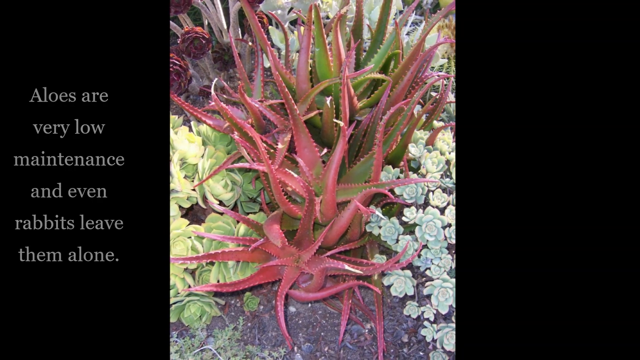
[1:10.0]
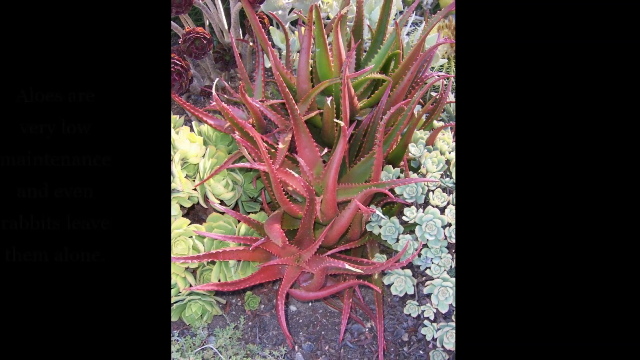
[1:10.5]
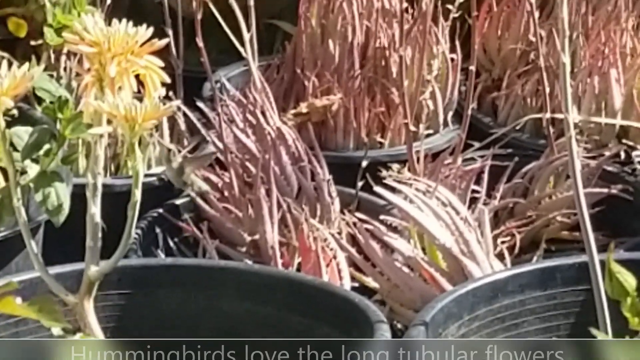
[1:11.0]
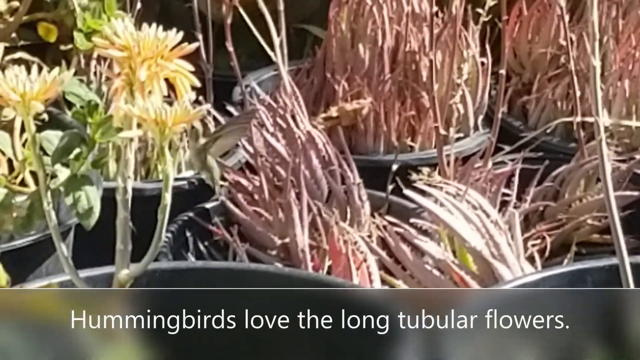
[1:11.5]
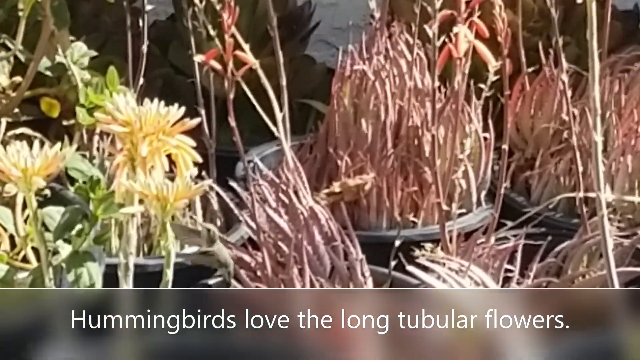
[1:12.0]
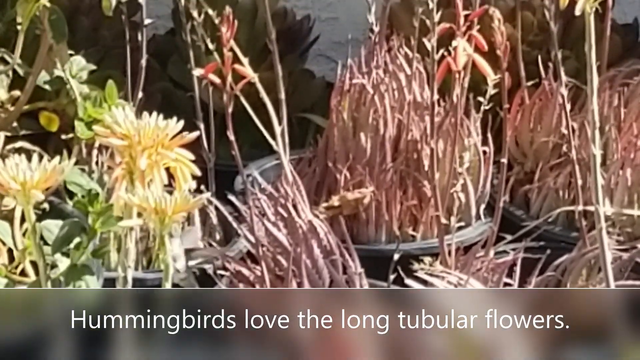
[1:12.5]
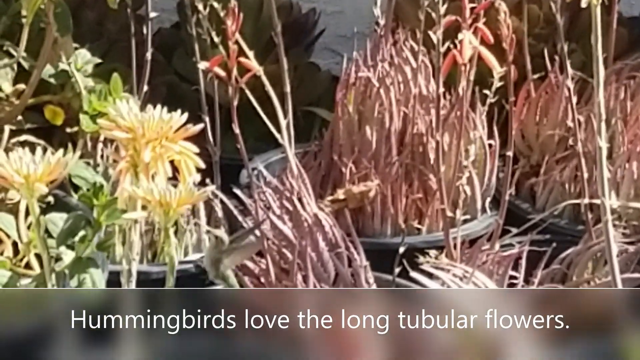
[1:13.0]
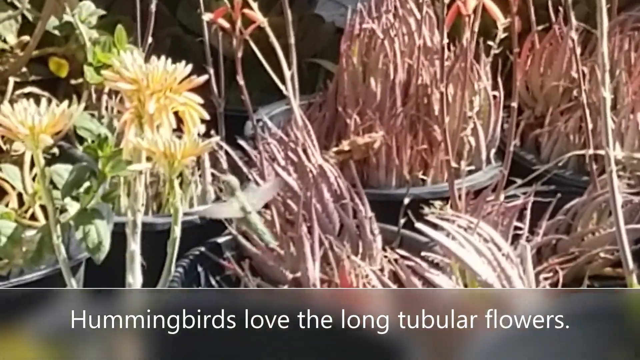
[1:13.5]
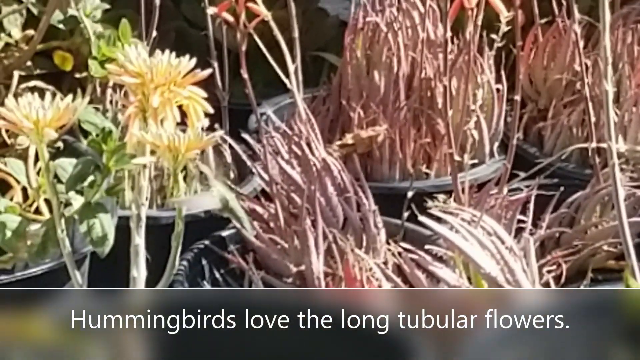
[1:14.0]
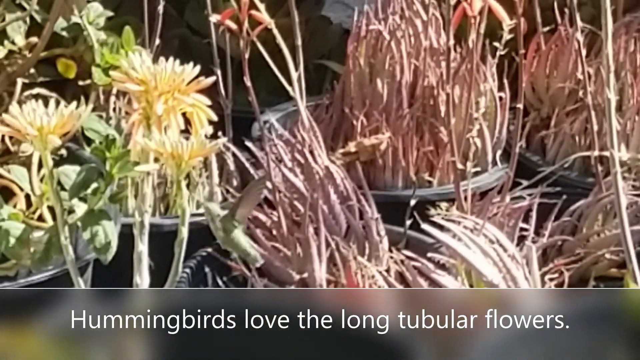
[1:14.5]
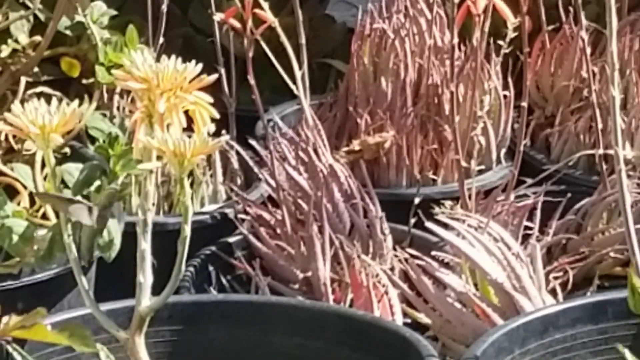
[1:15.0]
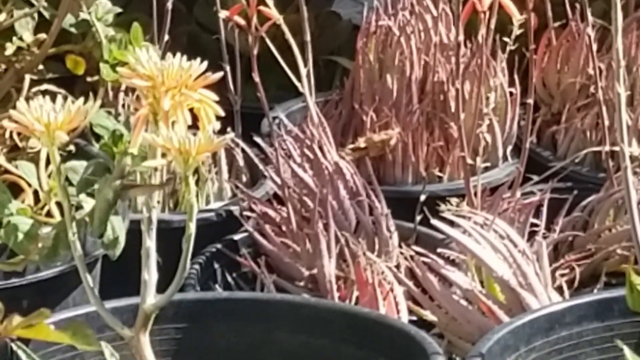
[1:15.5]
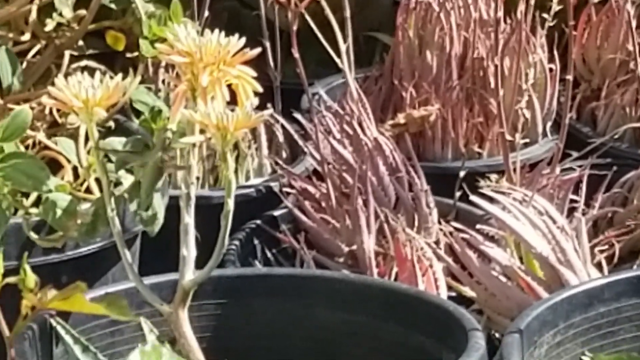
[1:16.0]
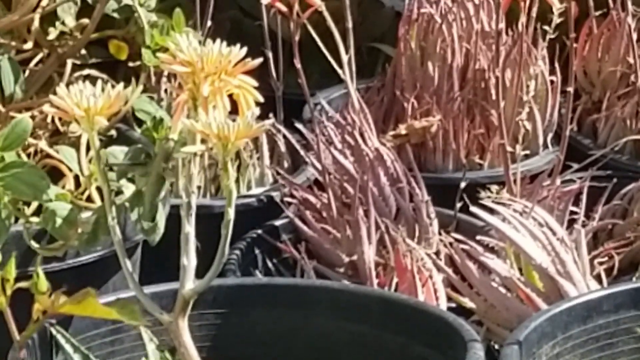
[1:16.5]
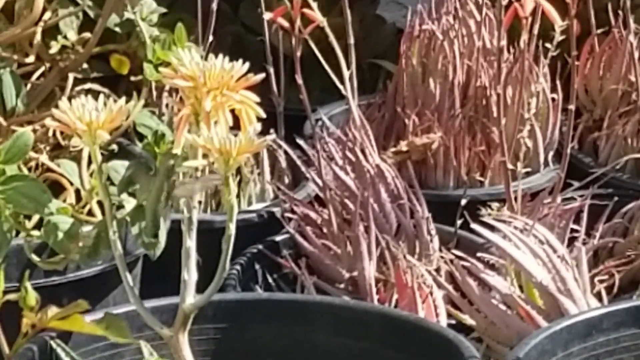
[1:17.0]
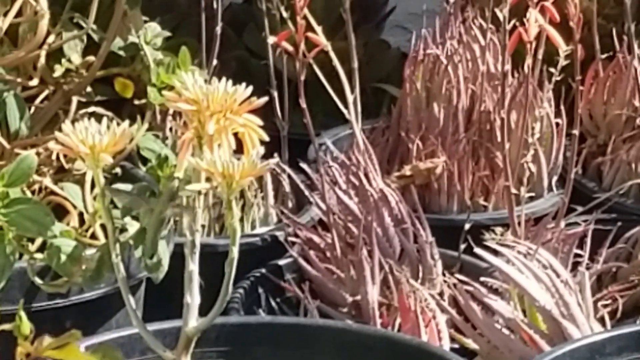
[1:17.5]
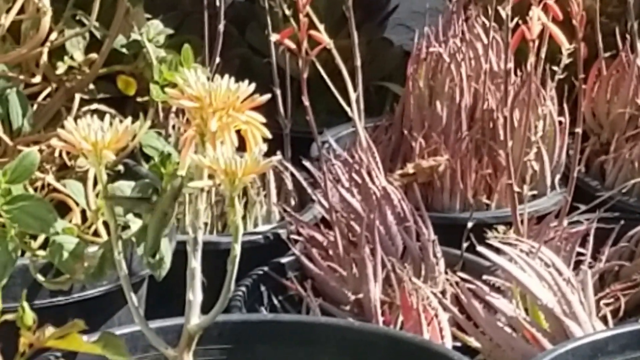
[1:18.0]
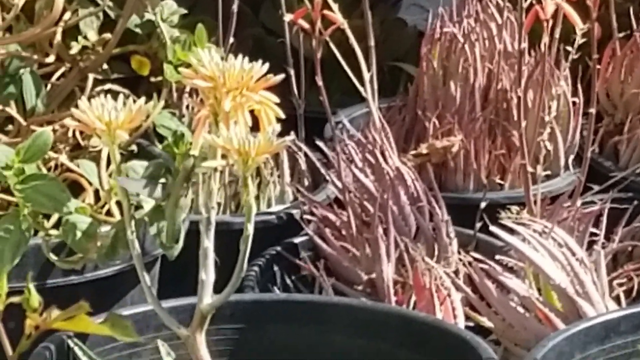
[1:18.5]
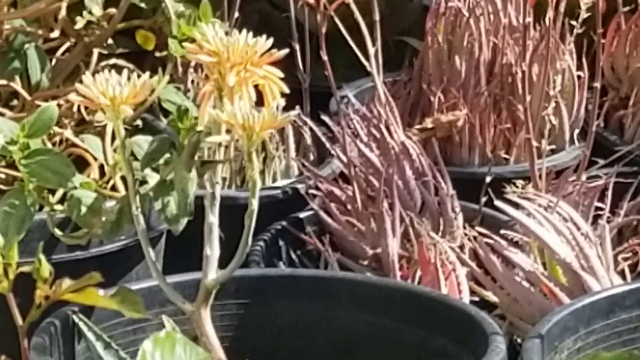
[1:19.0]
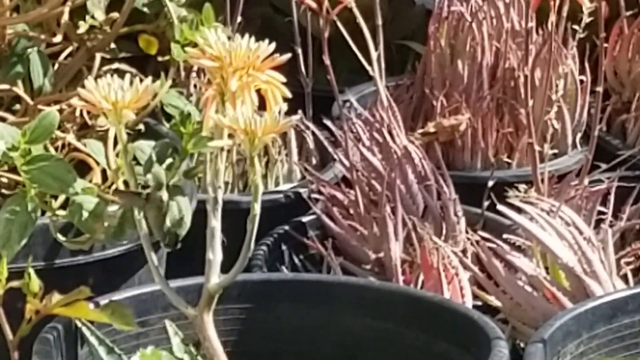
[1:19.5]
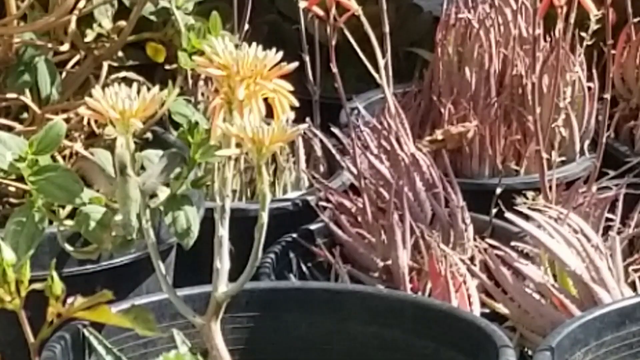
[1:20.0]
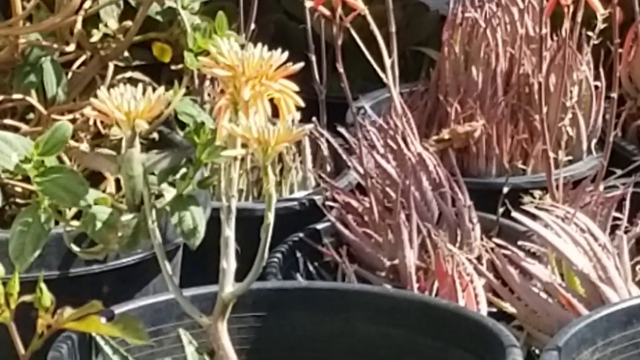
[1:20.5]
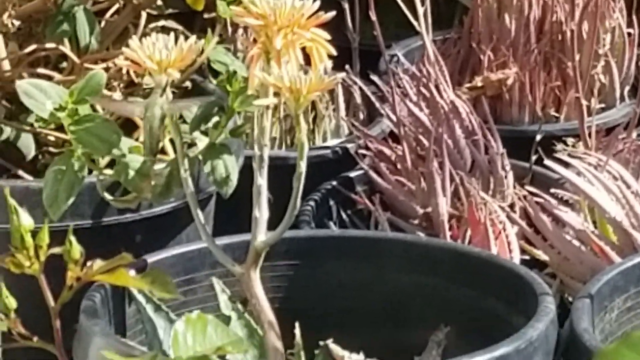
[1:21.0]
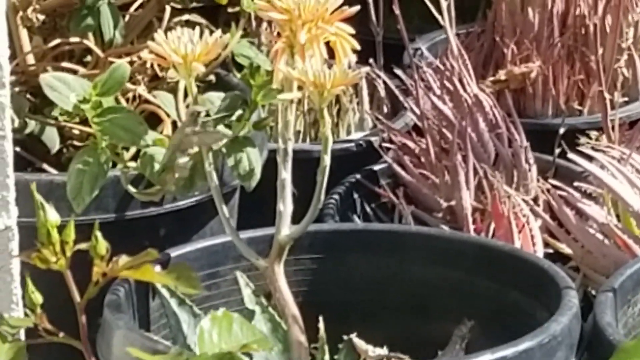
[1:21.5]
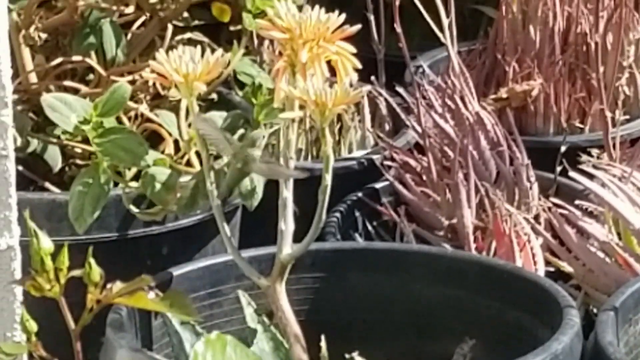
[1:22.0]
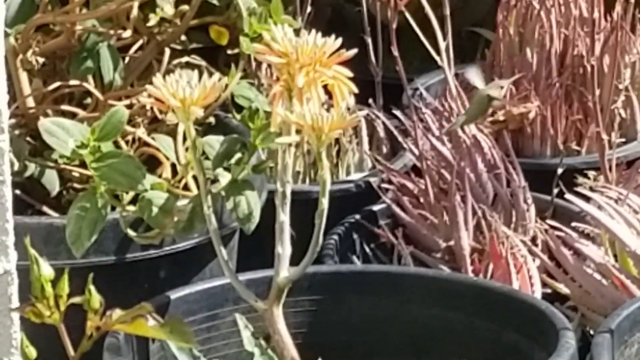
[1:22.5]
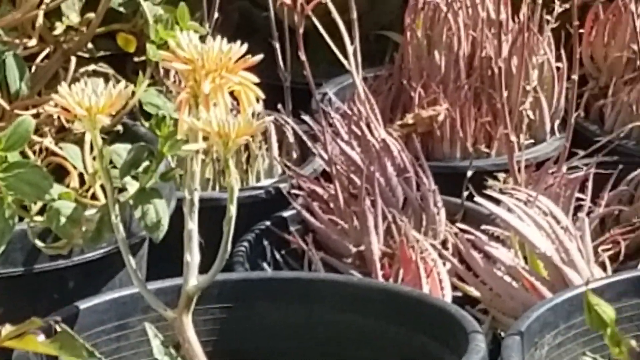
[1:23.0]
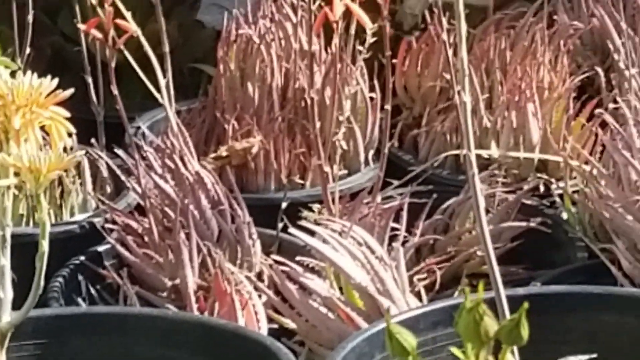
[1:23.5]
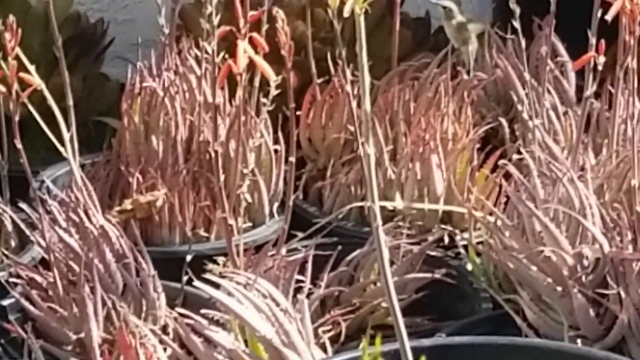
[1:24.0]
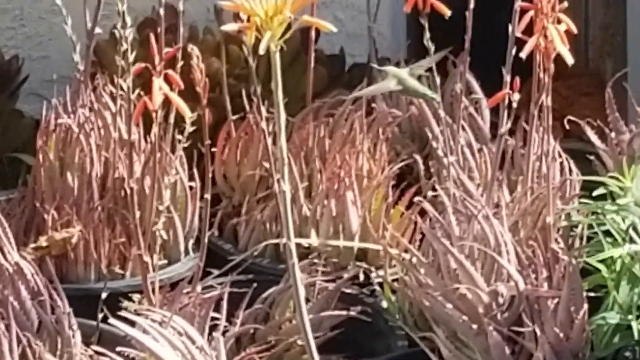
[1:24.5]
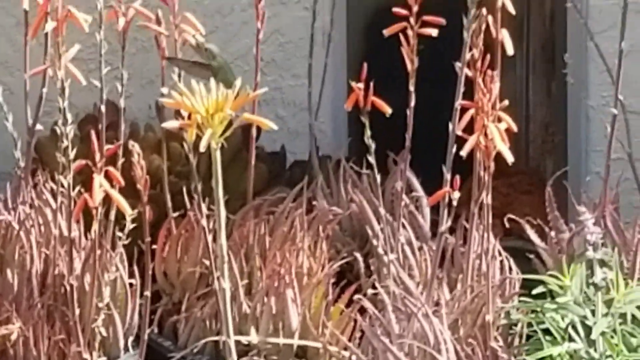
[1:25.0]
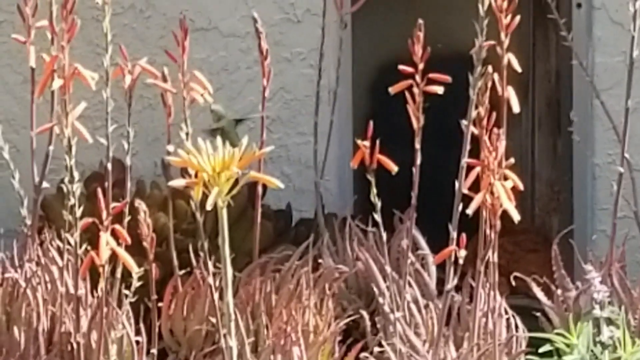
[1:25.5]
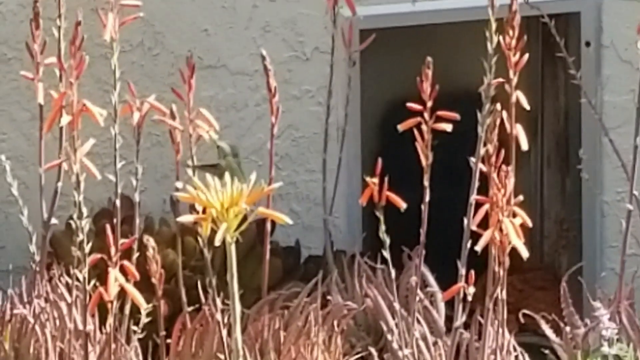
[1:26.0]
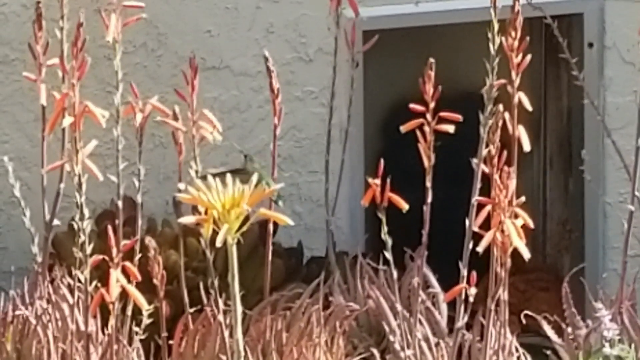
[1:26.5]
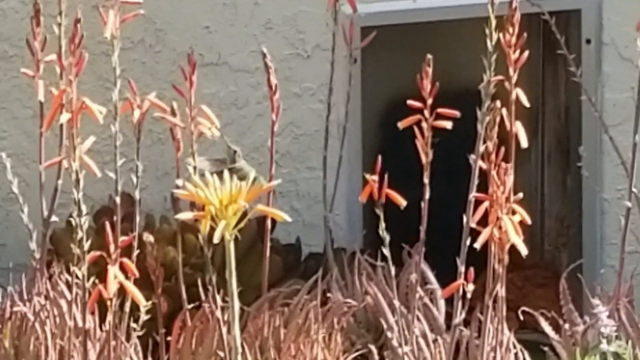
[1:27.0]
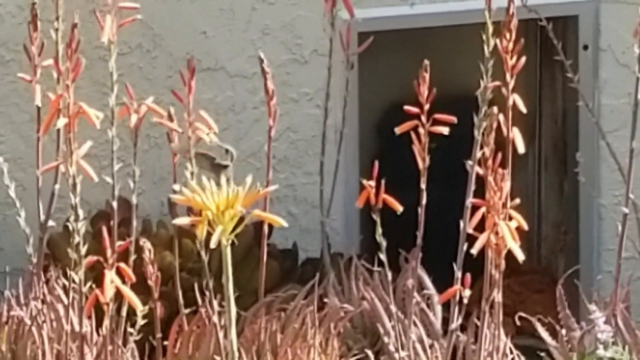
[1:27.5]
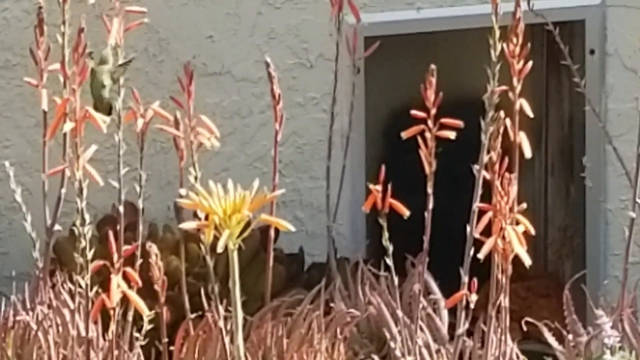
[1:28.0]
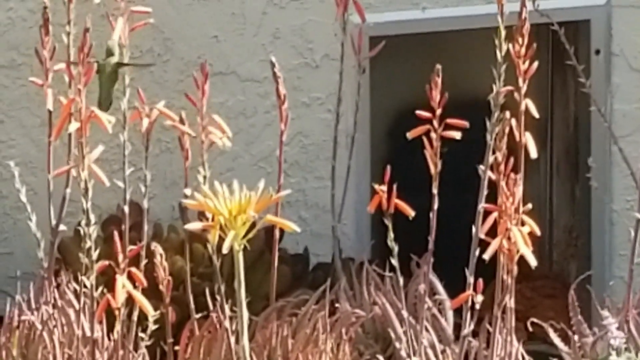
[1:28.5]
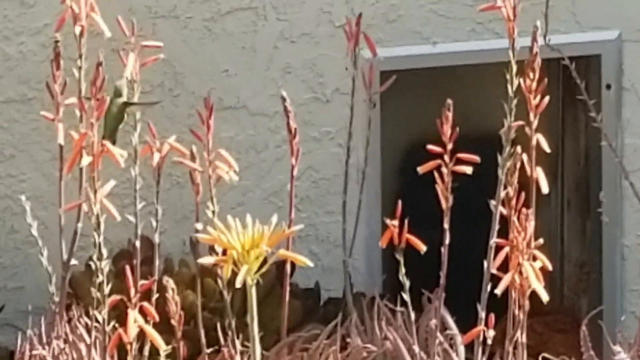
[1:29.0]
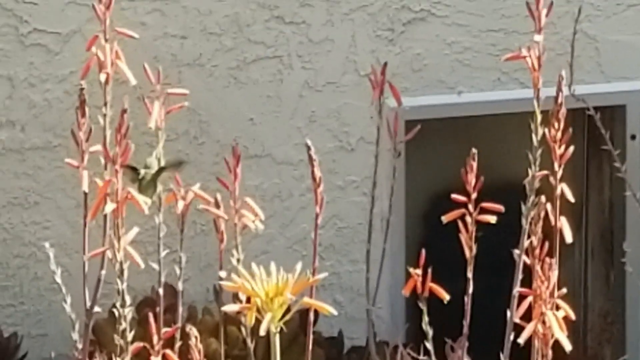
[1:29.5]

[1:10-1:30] Following the text "aloes are very low maintenance and even rabbits leave them alone", a hummingbird is seen pollinating a plant. The footage looks a little grainy, and the camera moves slightly to follow the hummingbird; it is a little shaky, as if filmed on a handheld camera. Text reads "hummingbirds love the long tubular flowers". The aloe plants have long tubular flowers at their tops in bright colours, orange or sometimes more red, and the hummingbird goes to many of these different flowers.